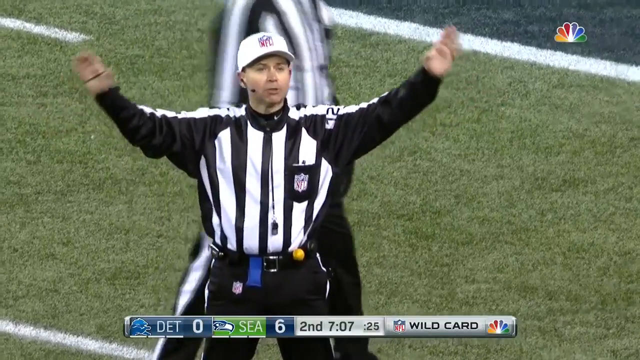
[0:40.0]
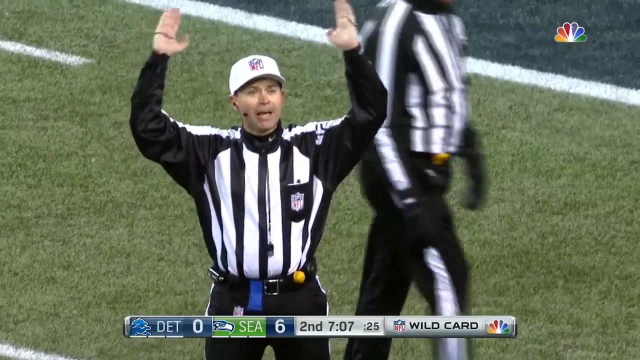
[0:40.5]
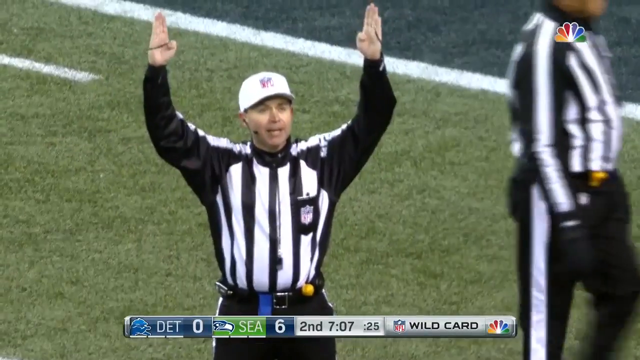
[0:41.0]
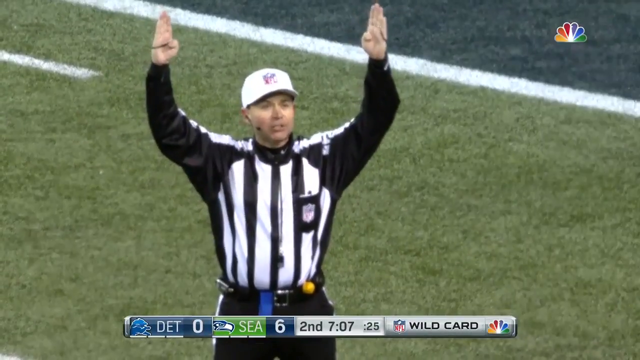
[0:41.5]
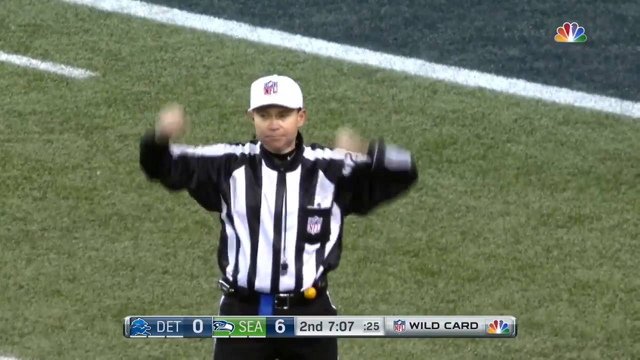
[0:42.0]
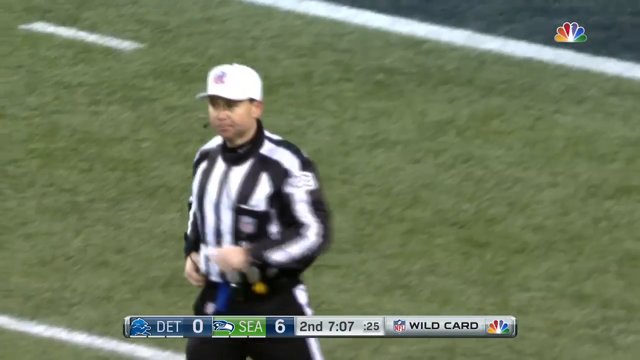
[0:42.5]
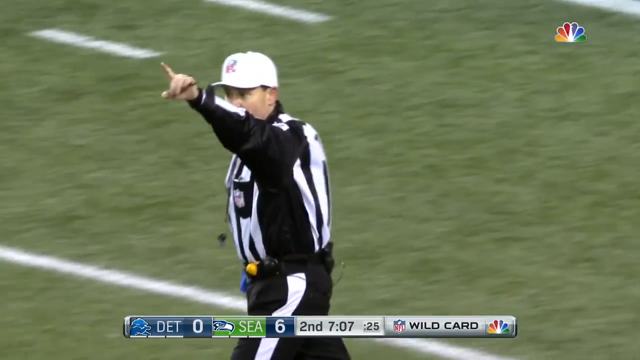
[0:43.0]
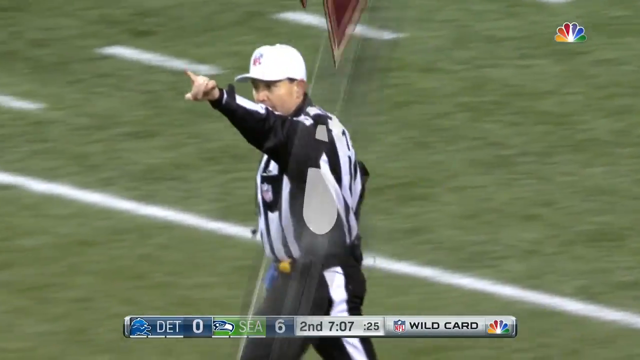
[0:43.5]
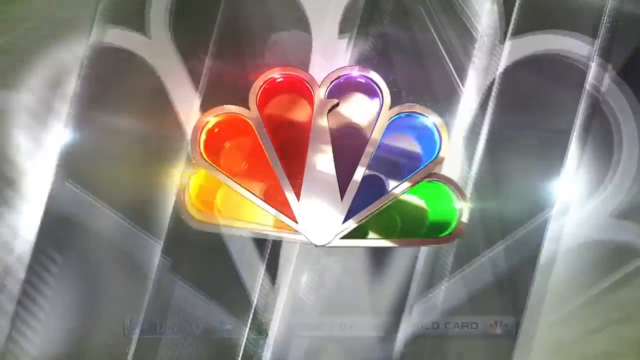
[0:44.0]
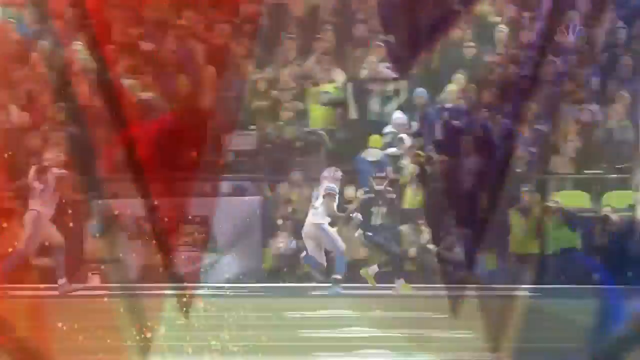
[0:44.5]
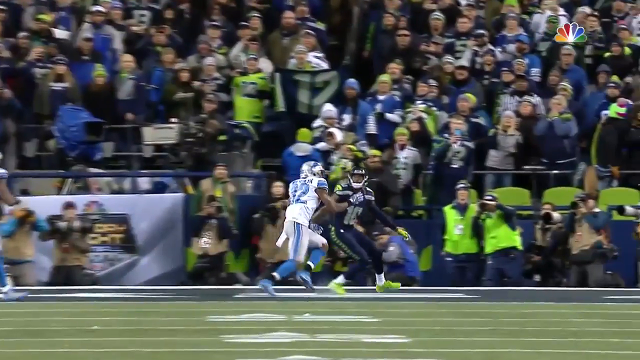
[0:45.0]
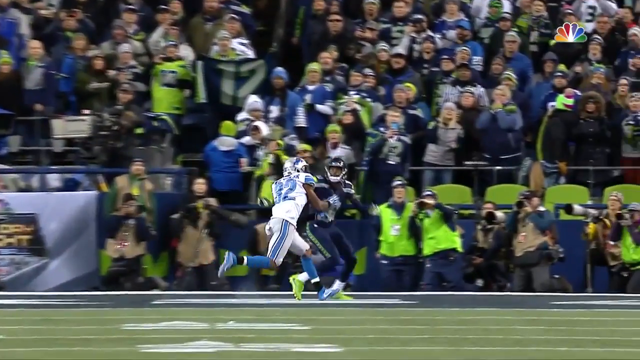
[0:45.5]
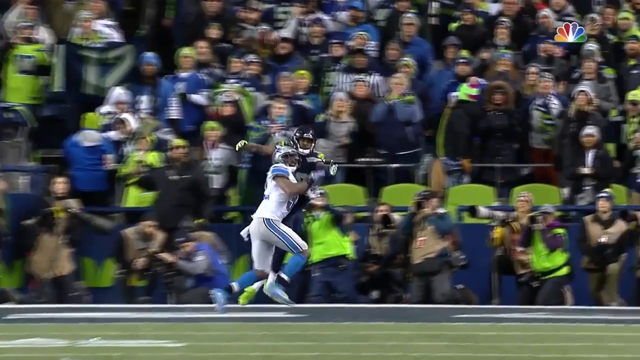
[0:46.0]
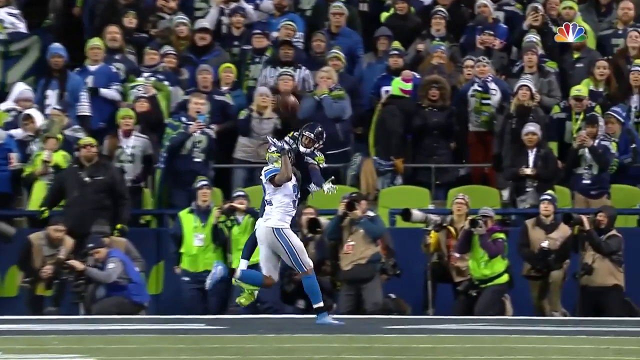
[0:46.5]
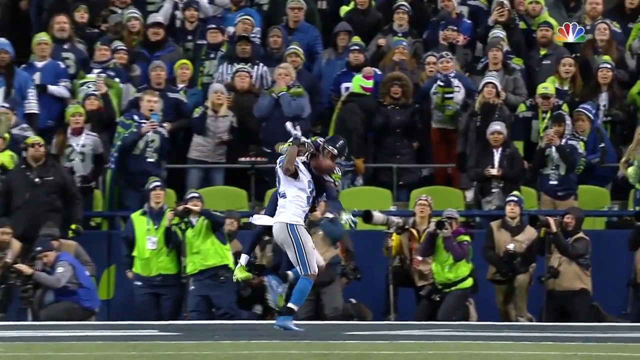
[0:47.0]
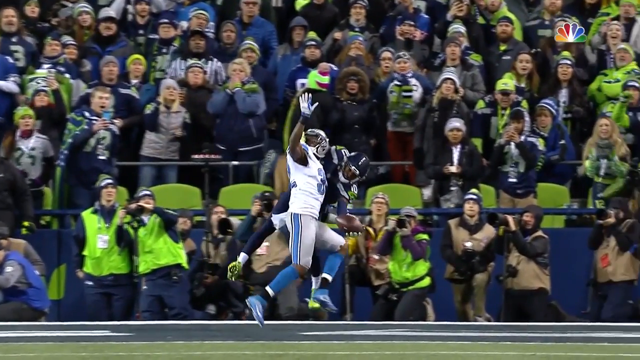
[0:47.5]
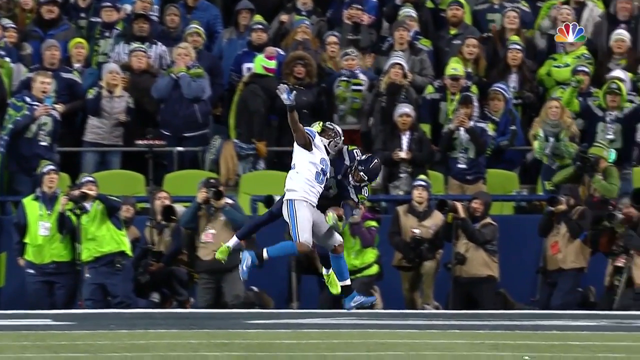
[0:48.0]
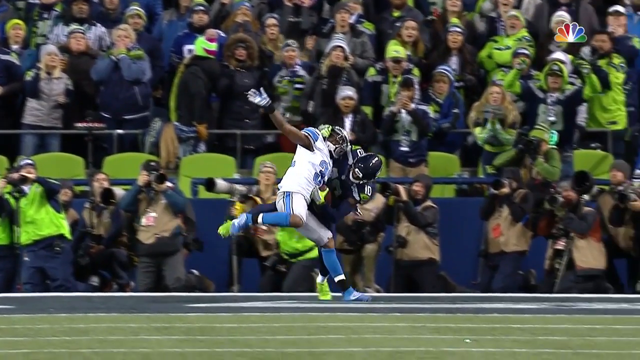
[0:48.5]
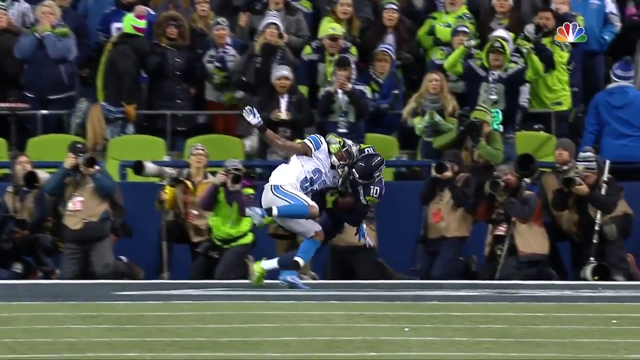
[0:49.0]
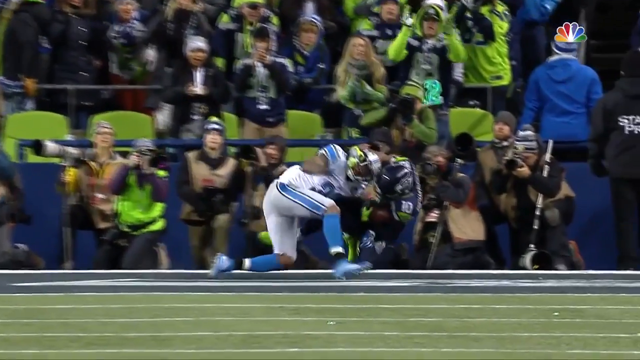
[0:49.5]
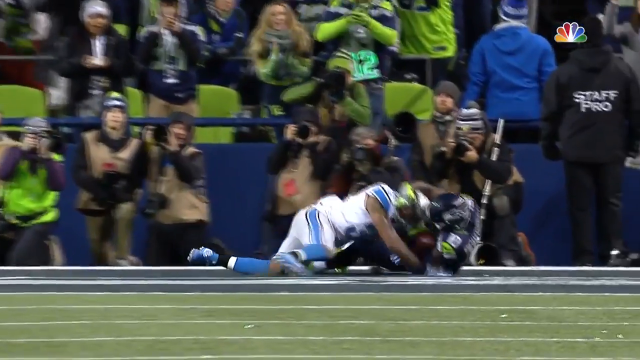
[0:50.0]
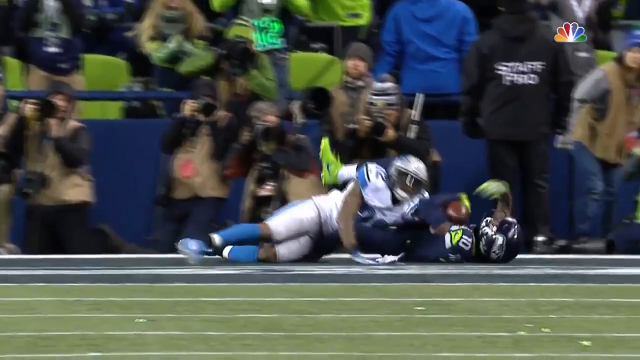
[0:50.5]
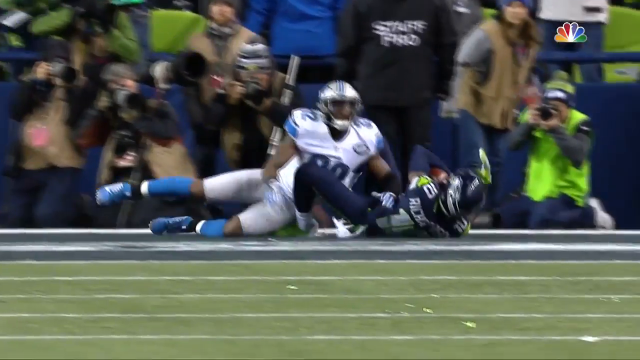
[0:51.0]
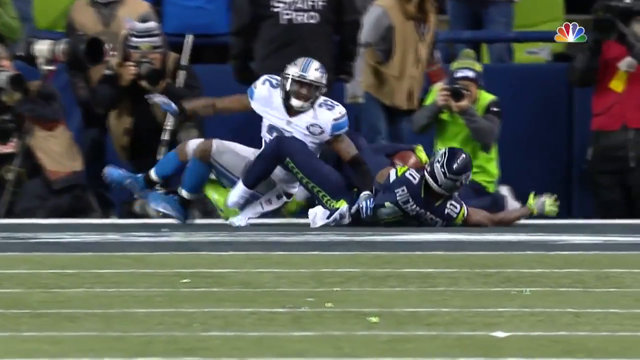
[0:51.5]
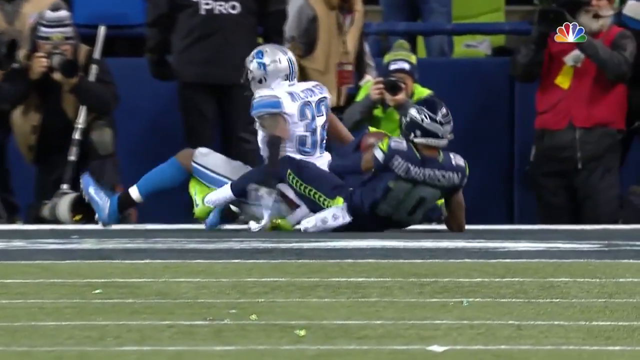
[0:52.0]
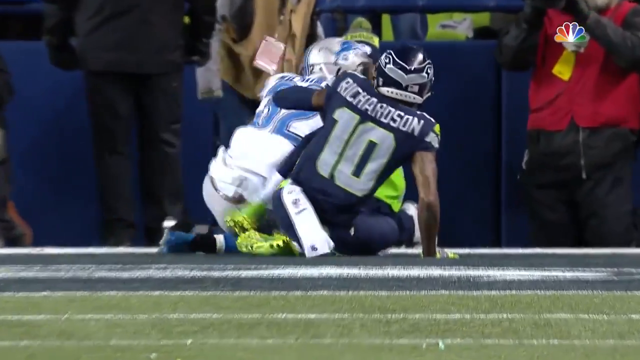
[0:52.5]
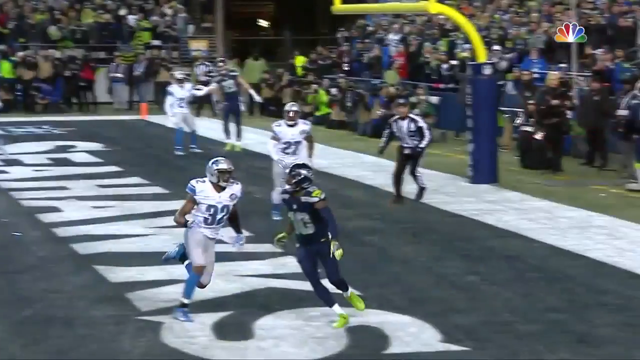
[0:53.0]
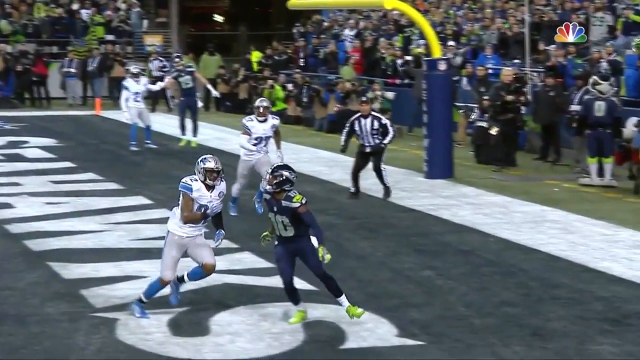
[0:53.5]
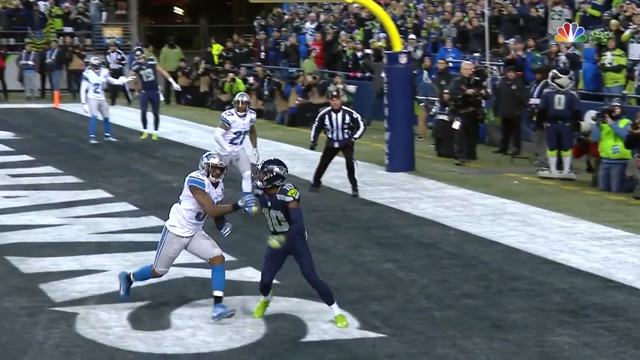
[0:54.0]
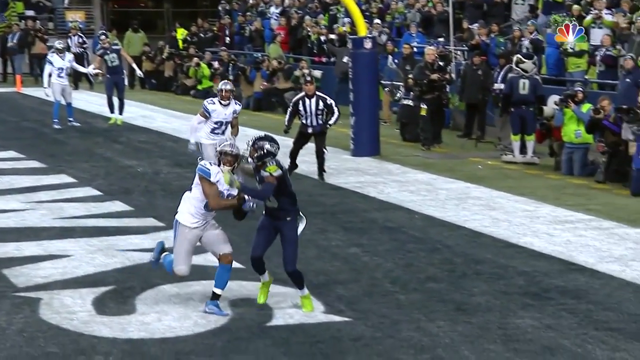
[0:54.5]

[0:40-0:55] The referee who signaled the touchdown walks away, seen from the side, pointing with one hand. The screen changes to the NBC logo with a grey logo behind it. A replay of the touchdown follows: the Seahawks player jumps to the side of the Lions player directly in front of him in a pass interference play. Despite the Lions player's penalty, the Seahawks player catches the ball with one hand, brings it into his chest, and falls onto his back, with the Lions player falling with him. The replay is then shown from another, closer angle from the side, and the catch is shown again.